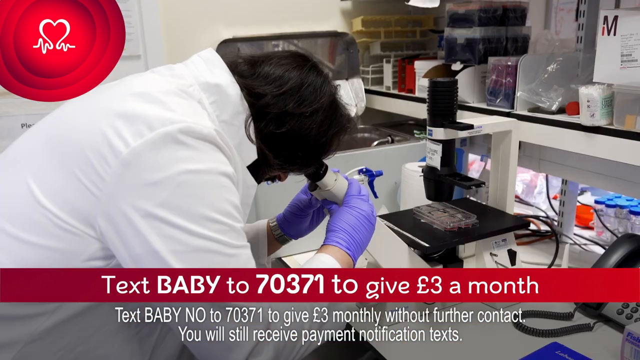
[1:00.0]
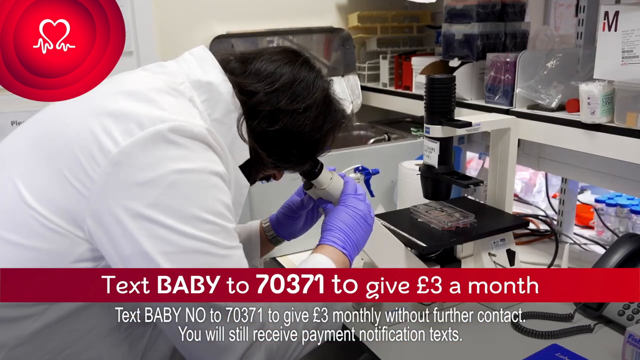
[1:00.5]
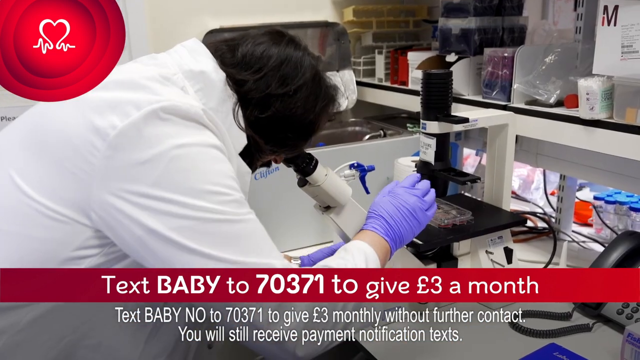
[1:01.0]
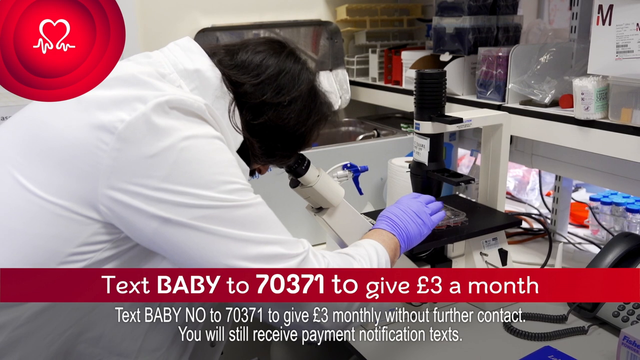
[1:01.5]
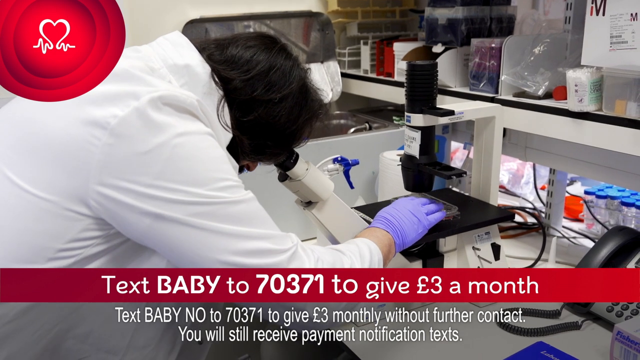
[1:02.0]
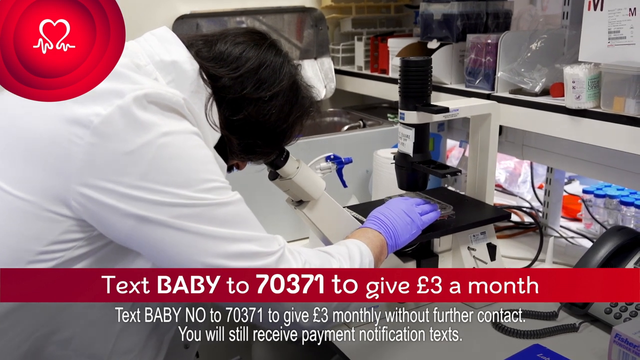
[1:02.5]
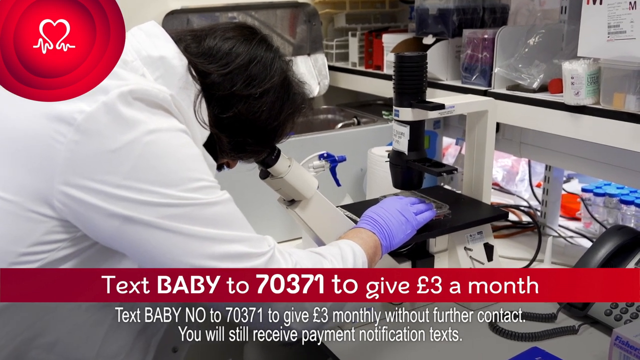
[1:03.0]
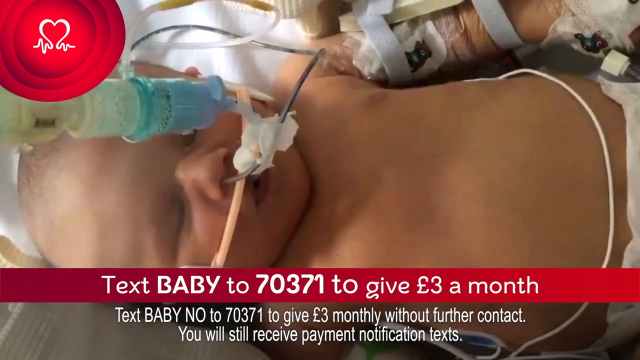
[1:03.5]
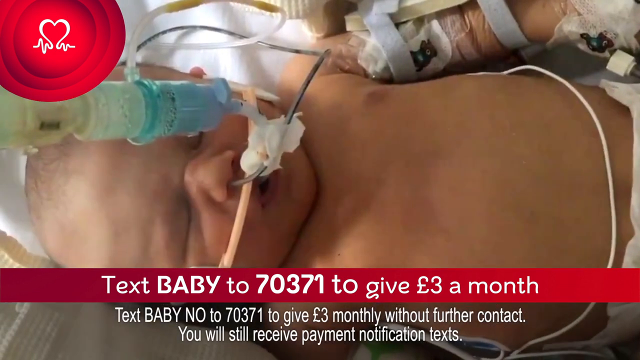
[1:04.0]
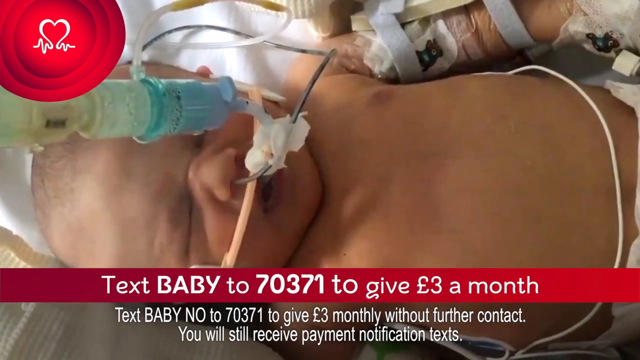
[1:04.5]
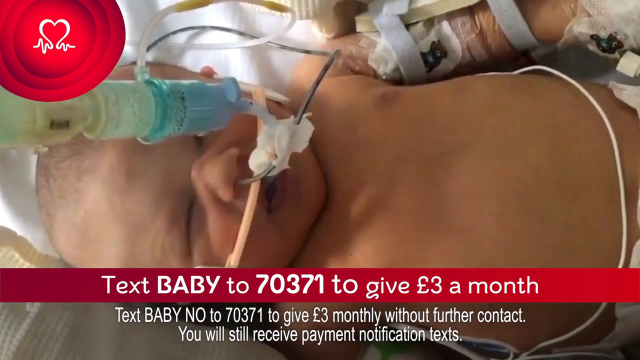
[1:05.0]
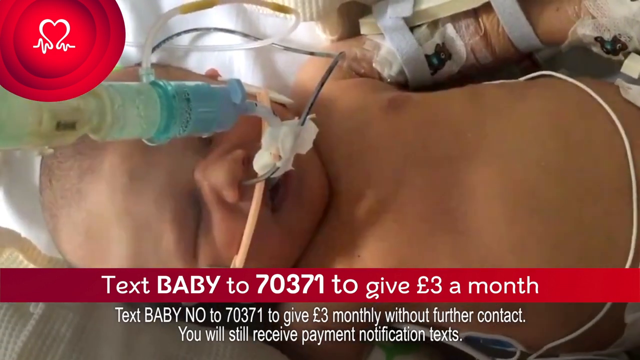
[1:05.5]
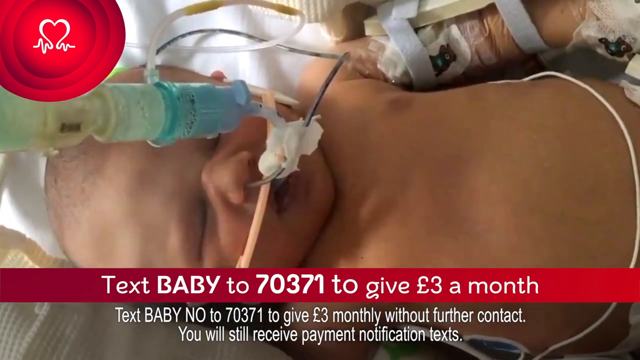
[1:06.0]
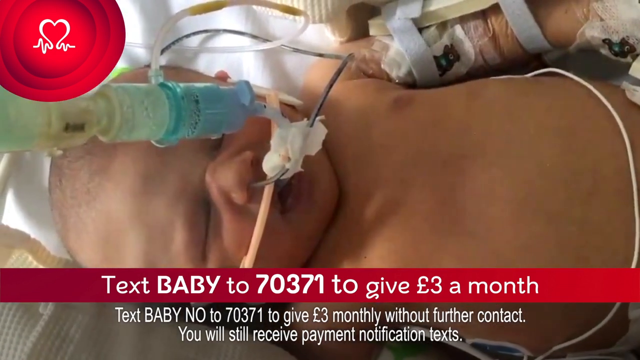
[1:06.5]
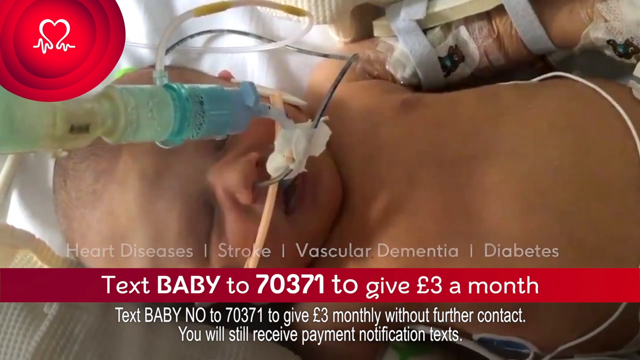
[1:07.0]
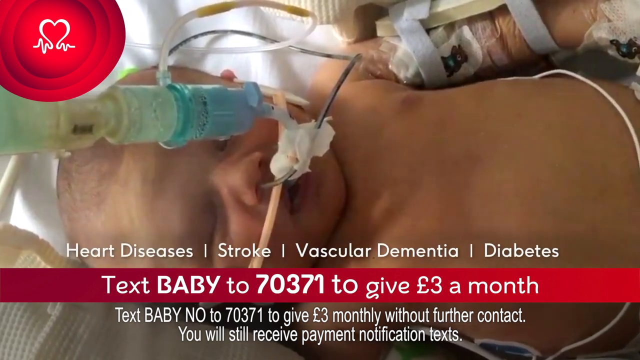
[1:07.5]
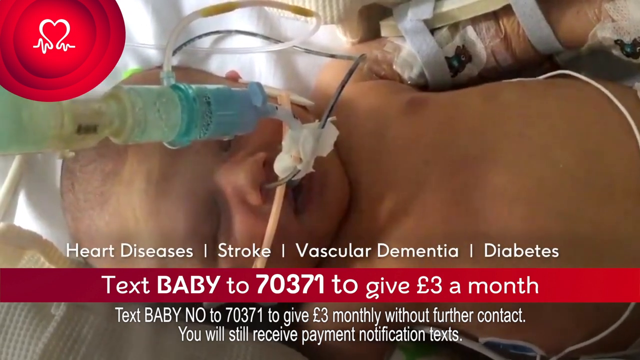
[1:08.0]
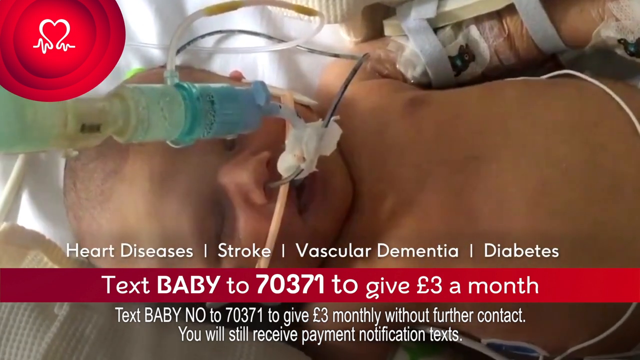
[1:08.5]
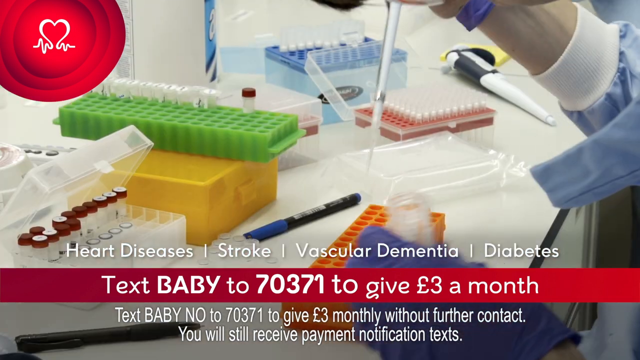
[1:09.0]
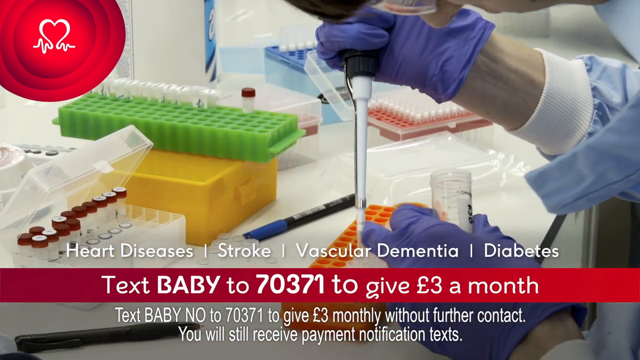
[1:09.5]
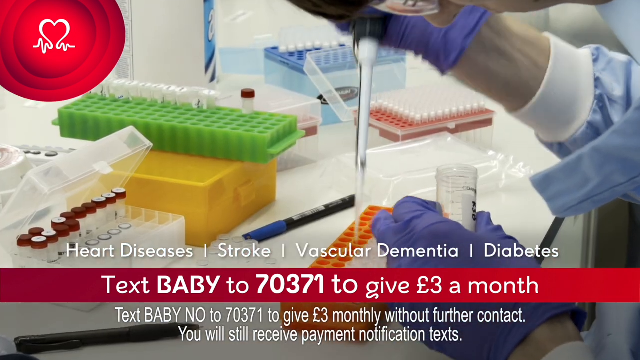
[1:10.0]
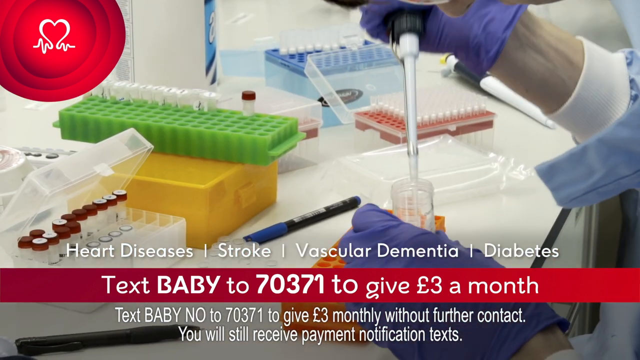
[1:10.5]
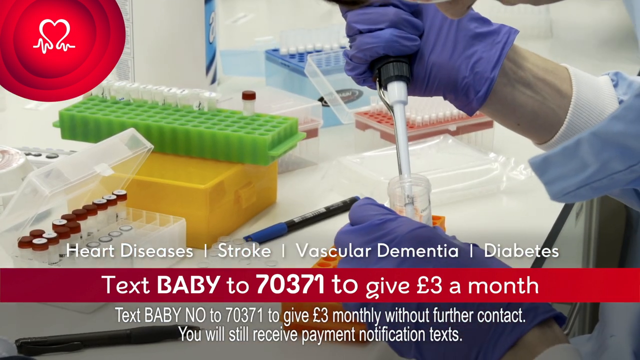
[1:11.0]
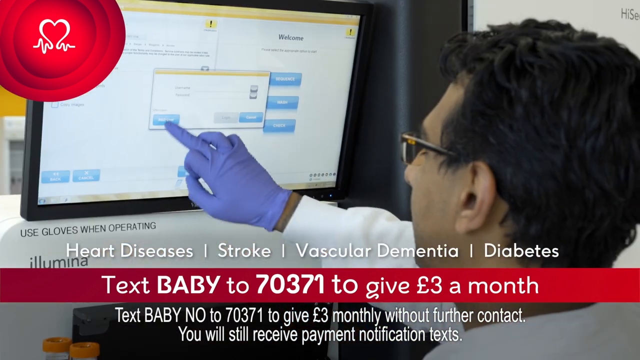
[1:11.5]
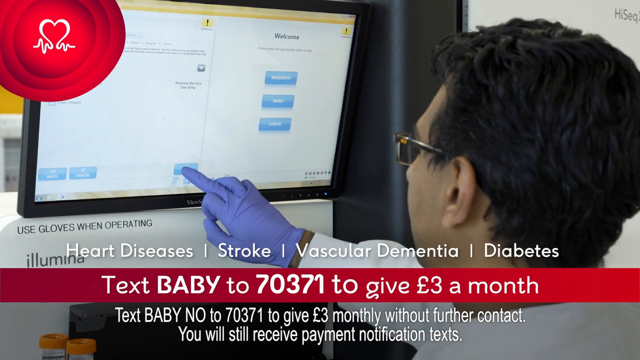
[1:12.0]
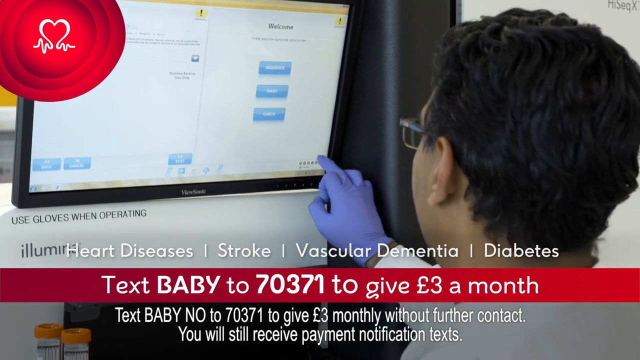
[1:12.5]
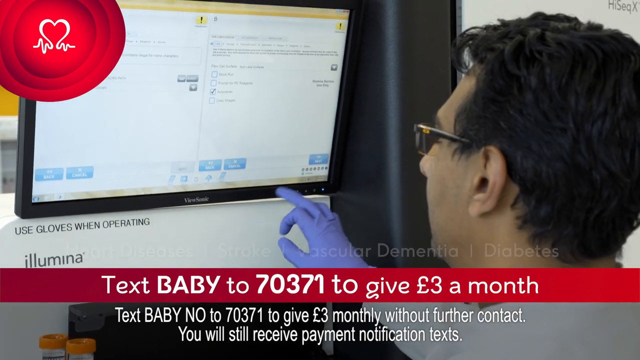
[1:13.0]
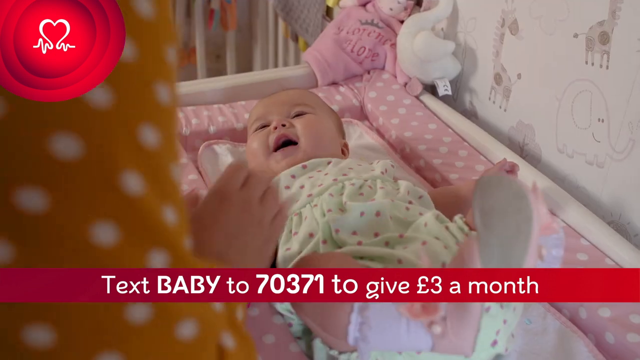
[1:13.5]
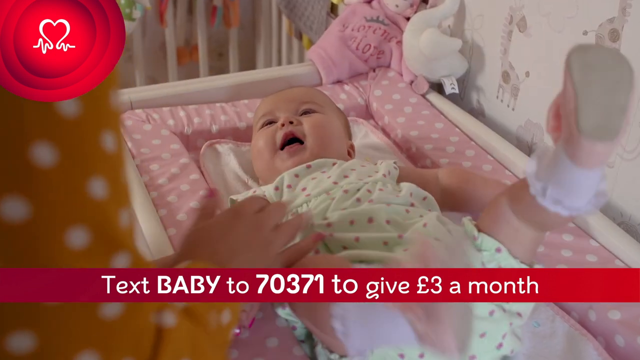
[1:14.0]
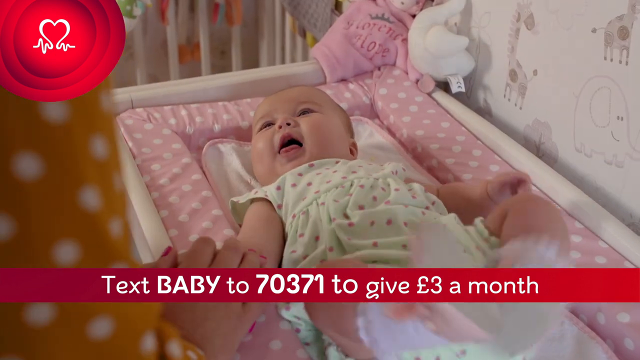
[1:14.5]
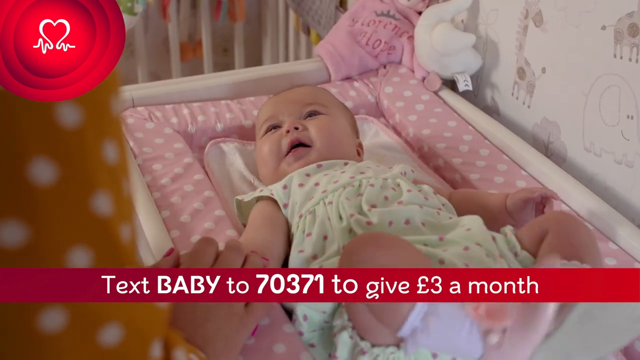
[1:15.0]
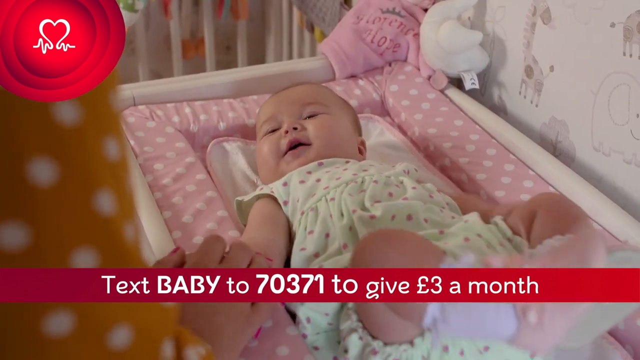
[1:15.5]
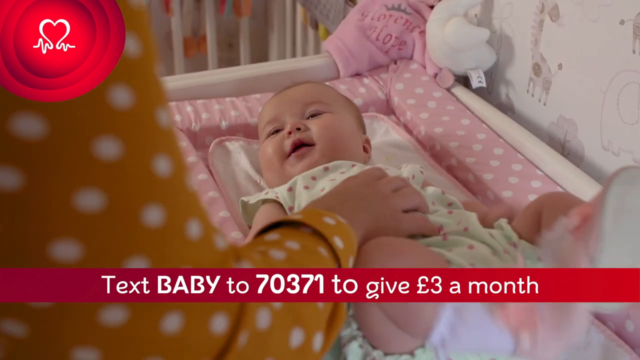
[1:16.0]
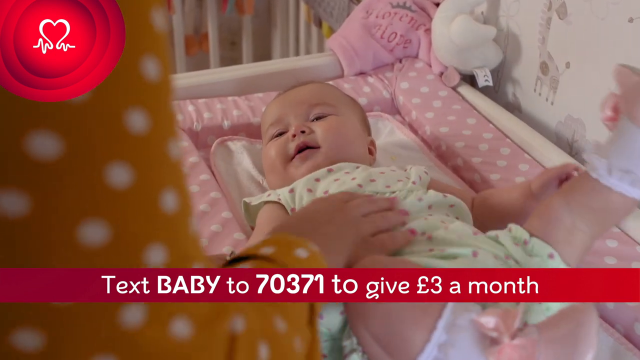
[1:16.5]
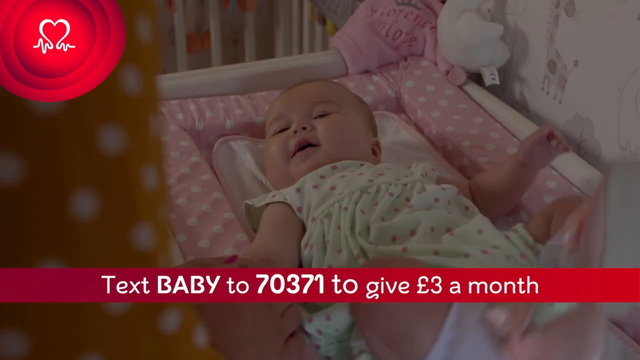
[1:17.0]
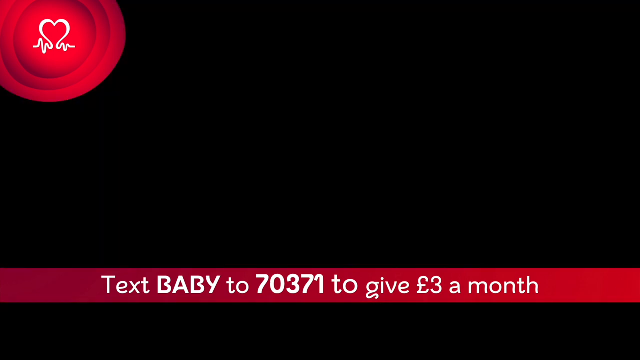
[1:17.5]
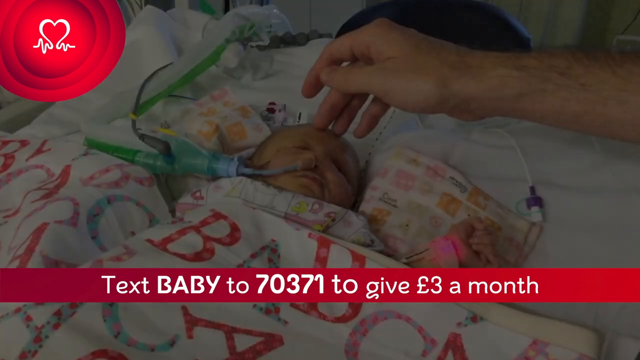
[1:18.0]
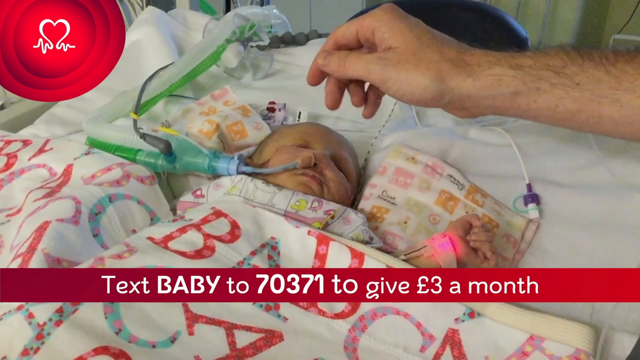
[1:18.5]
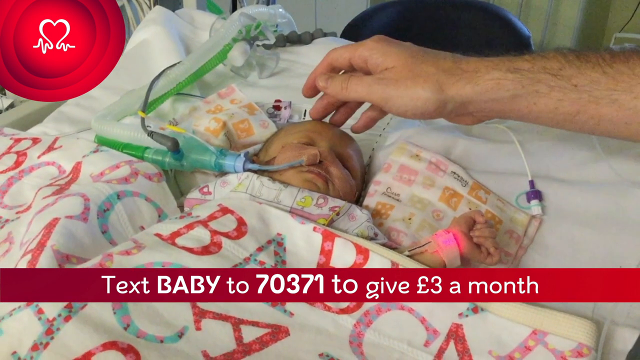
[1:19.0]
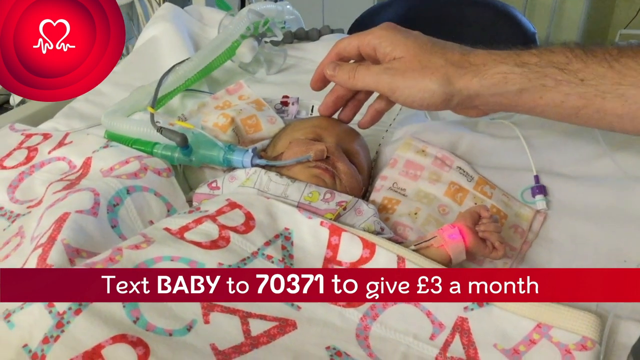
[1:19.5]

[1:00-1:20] A series of images shows people in laboratory research settings and babies either in the ICU in a hospital or at home with their mother. One image shows someone looking through a microscope in a laboratory; another shows someone in a white coat pointing to a display on a computer screen. Throughout, a red text bar at the bottom reads "Text BABY to 70371 to give three pounds a month." Below it the text reads "Text BABY NO to 70371 to give three pounds monthly without further contact. You will still receive payment notification texts." Above the red text bar, words divided by short vertical white lines read "heart diseases, stroke, vascular dementia, diabetes." In the upper right corner is a logo that looks like three red concentric circles with the outline of a heart in the center; at the base of the heart, the lines on either side look like the up and down lines of a heart monitor readout.